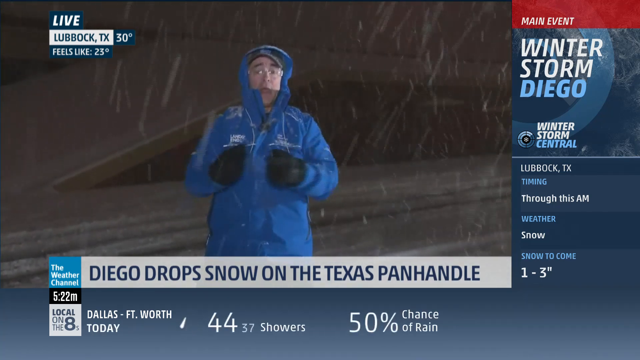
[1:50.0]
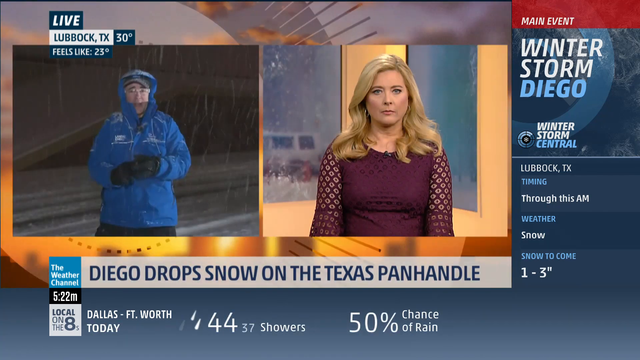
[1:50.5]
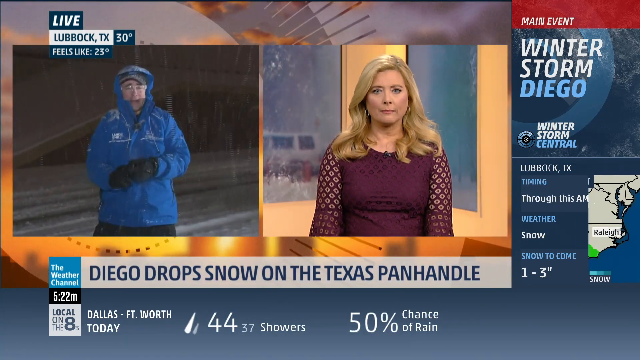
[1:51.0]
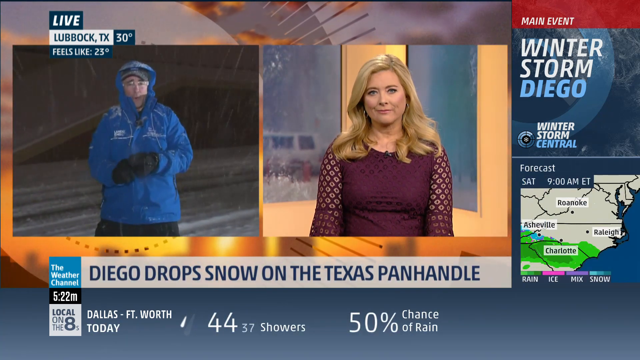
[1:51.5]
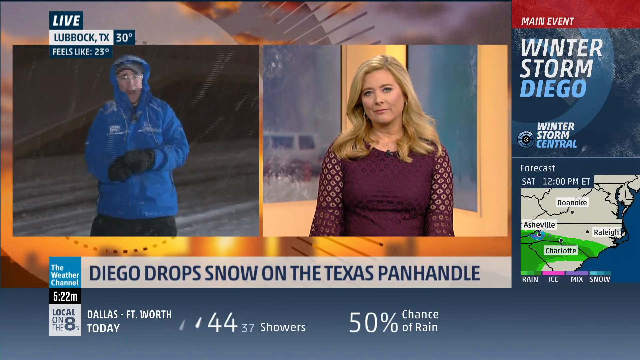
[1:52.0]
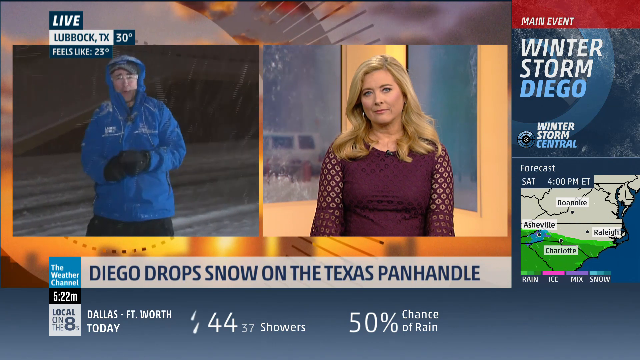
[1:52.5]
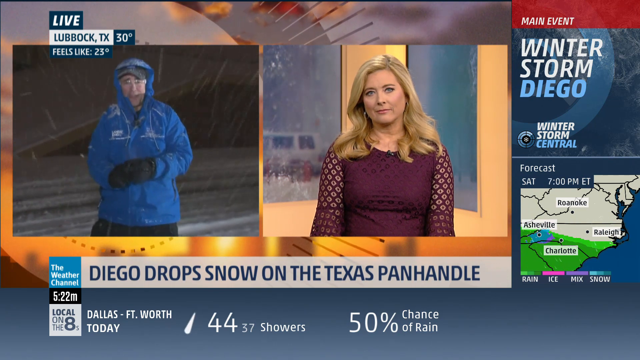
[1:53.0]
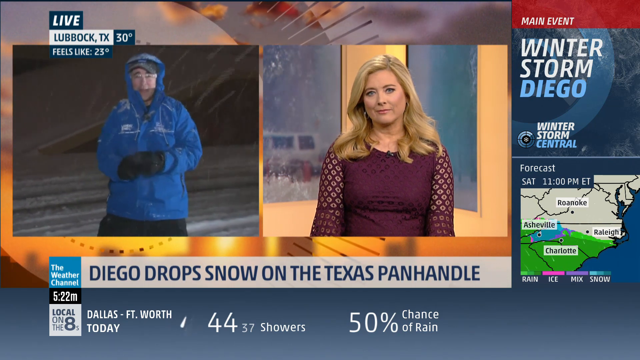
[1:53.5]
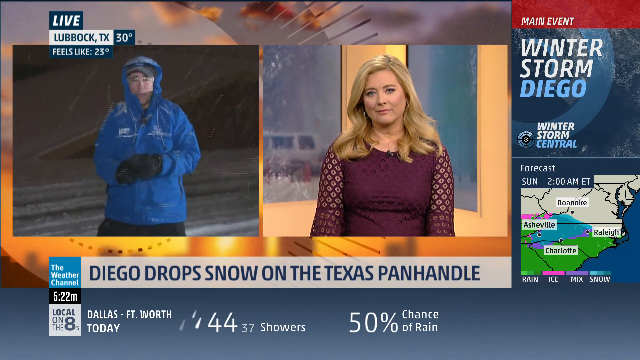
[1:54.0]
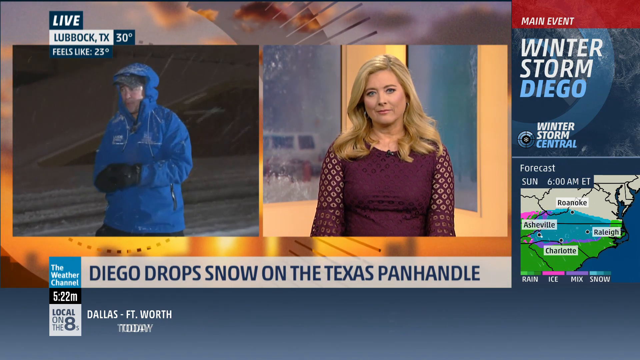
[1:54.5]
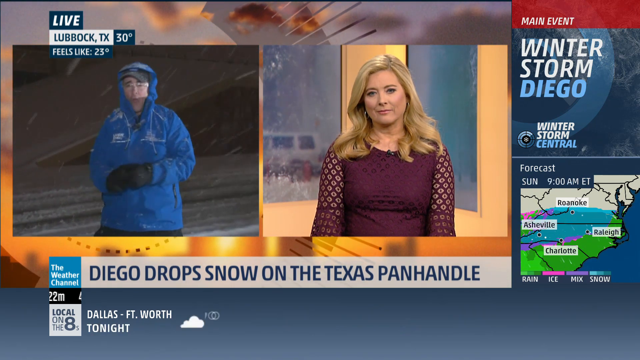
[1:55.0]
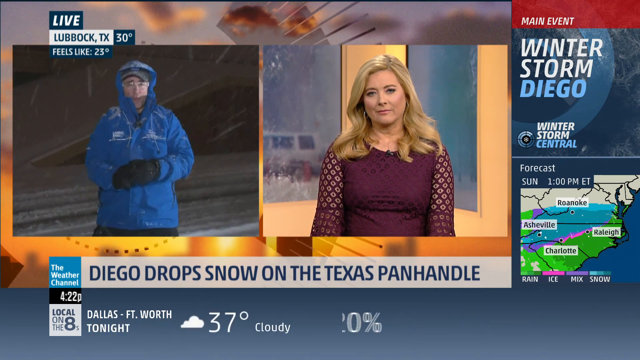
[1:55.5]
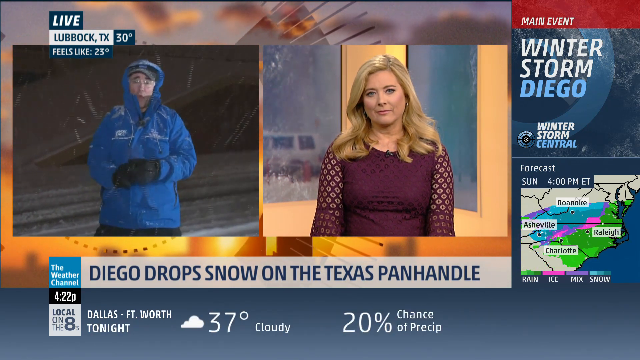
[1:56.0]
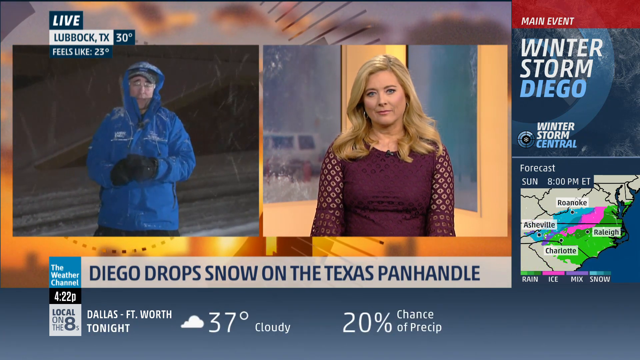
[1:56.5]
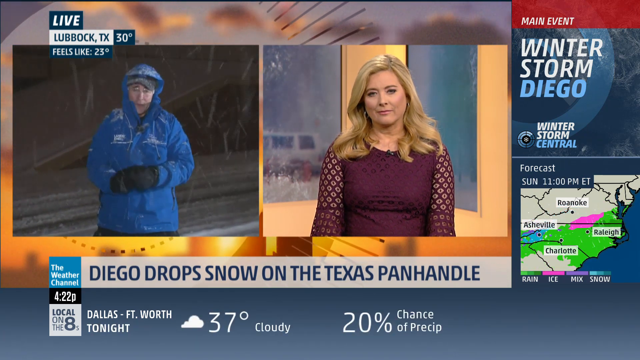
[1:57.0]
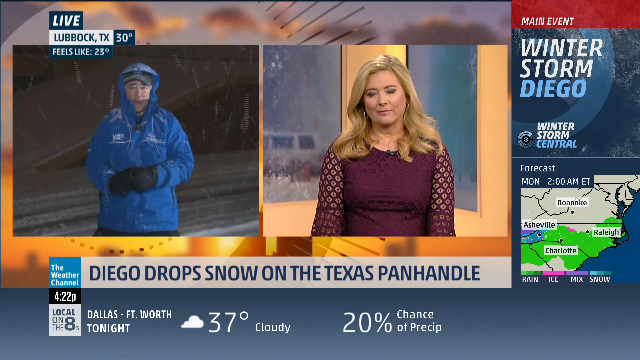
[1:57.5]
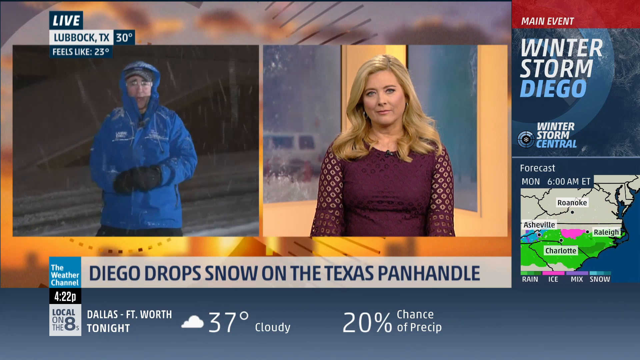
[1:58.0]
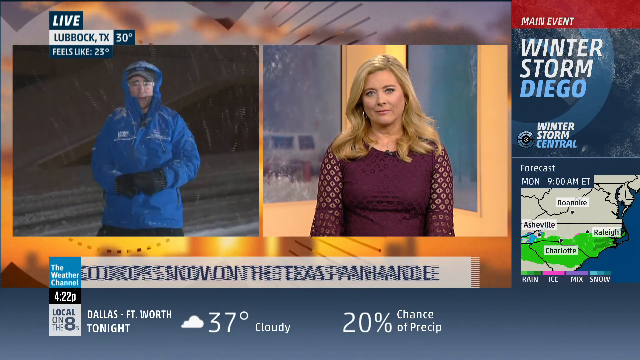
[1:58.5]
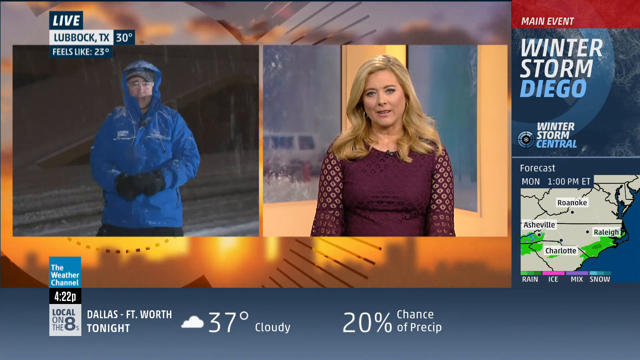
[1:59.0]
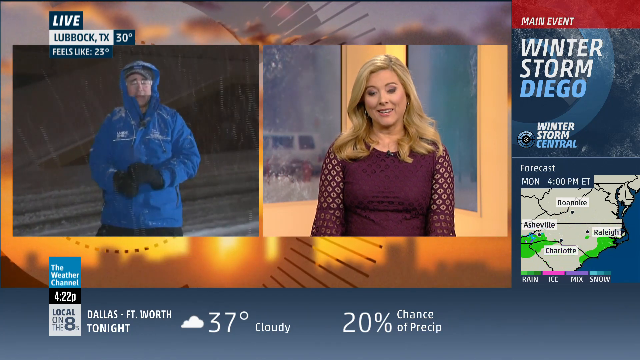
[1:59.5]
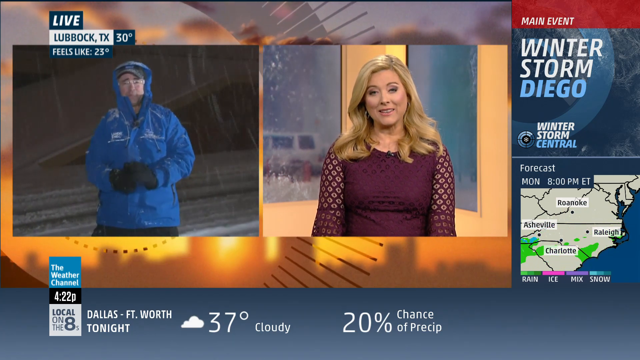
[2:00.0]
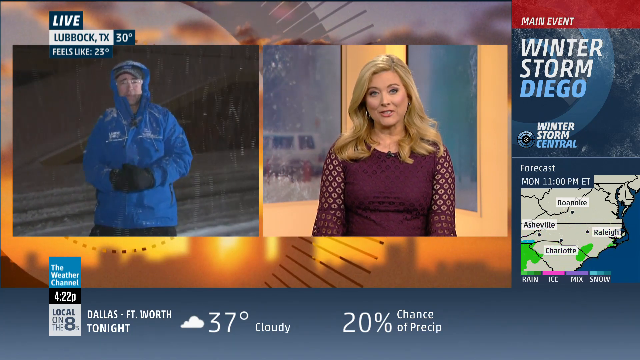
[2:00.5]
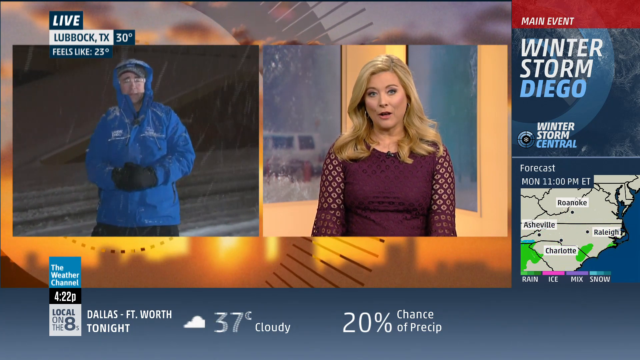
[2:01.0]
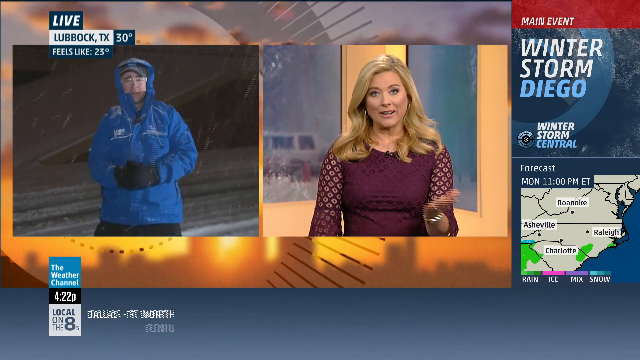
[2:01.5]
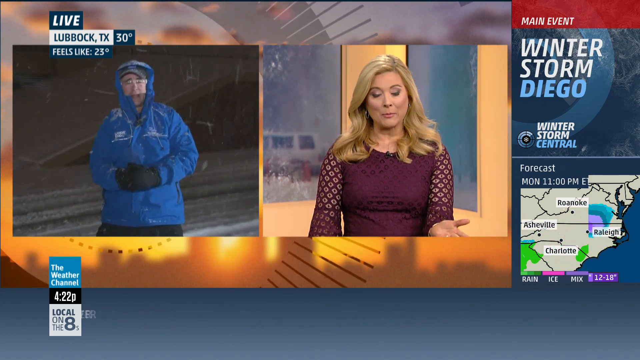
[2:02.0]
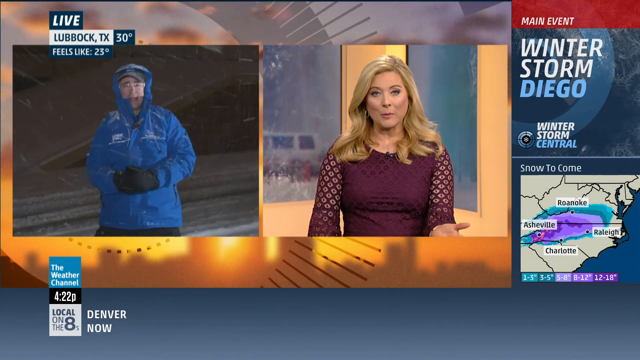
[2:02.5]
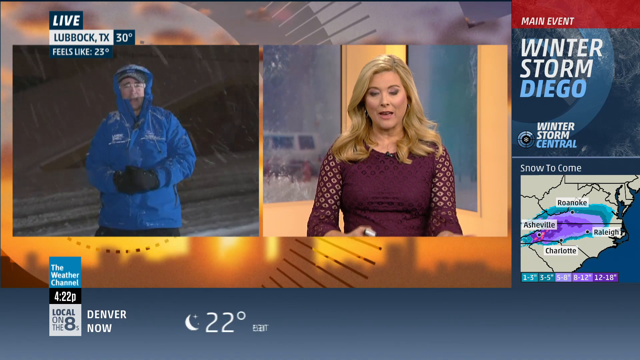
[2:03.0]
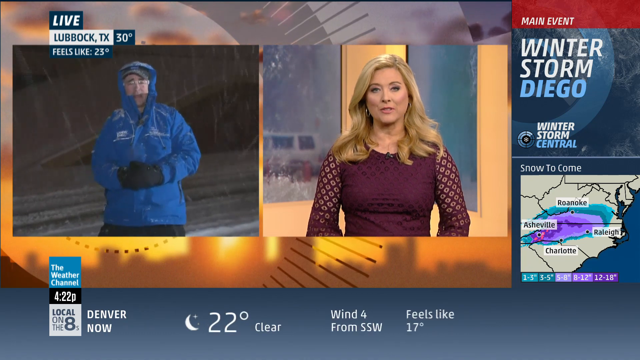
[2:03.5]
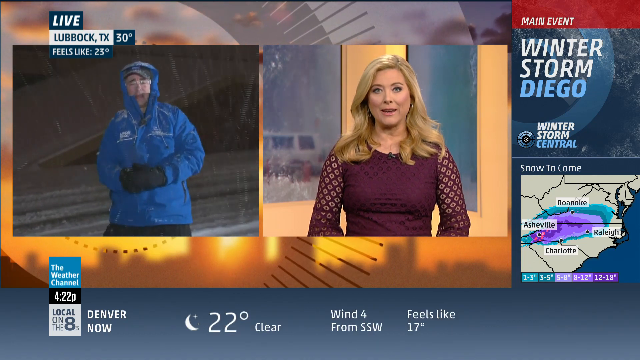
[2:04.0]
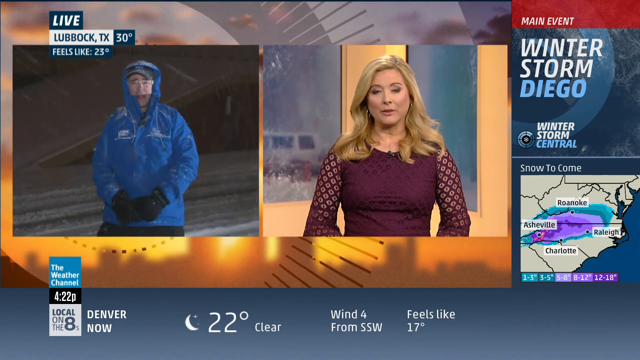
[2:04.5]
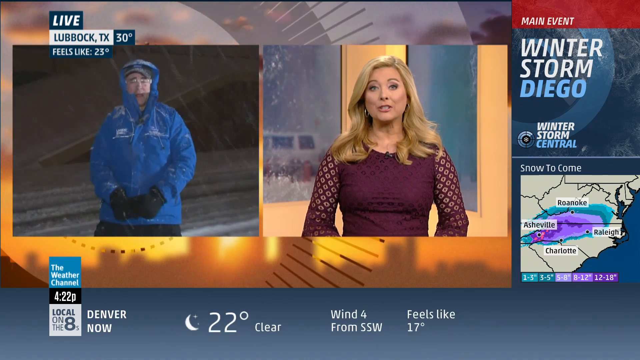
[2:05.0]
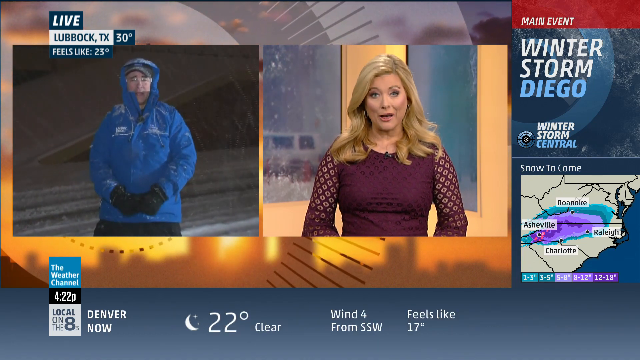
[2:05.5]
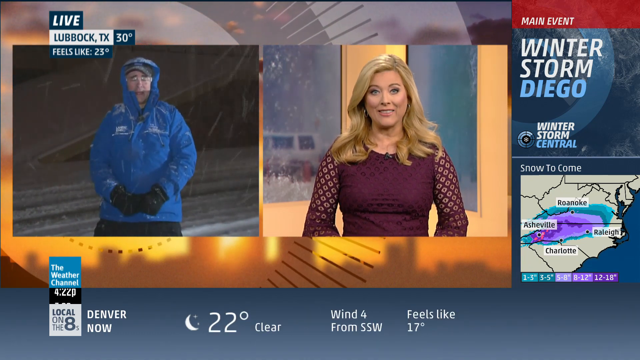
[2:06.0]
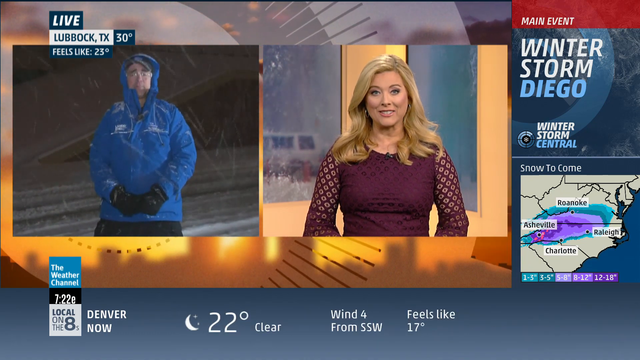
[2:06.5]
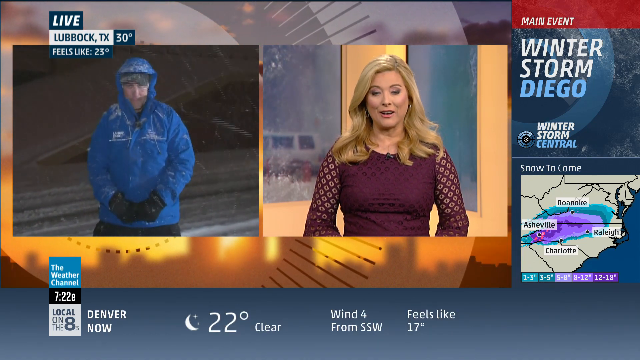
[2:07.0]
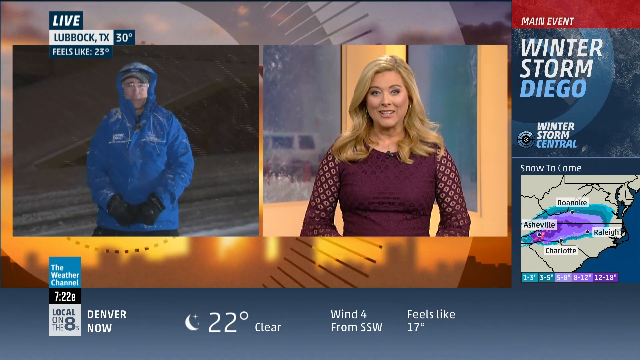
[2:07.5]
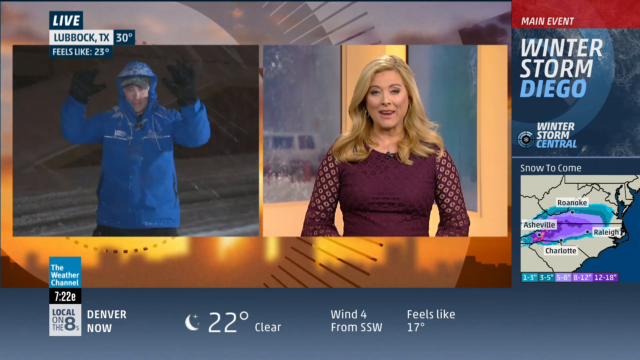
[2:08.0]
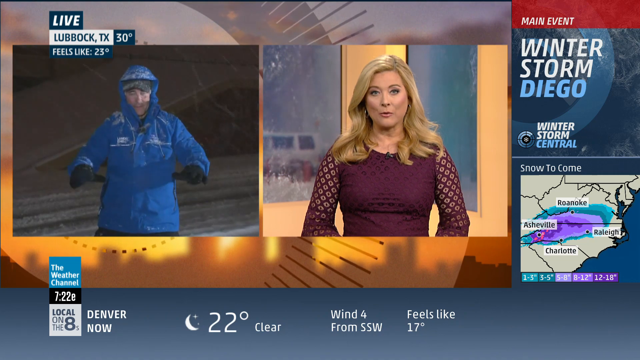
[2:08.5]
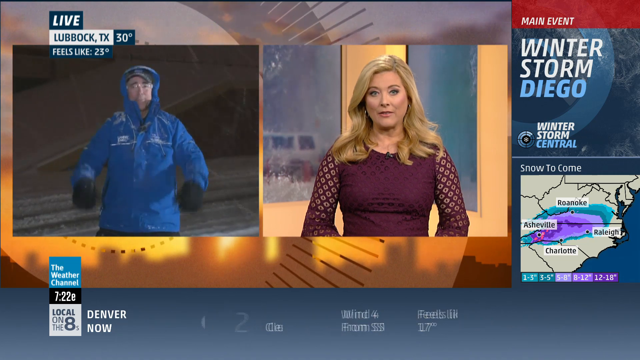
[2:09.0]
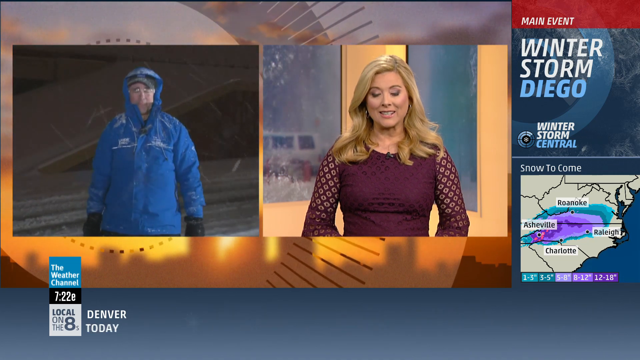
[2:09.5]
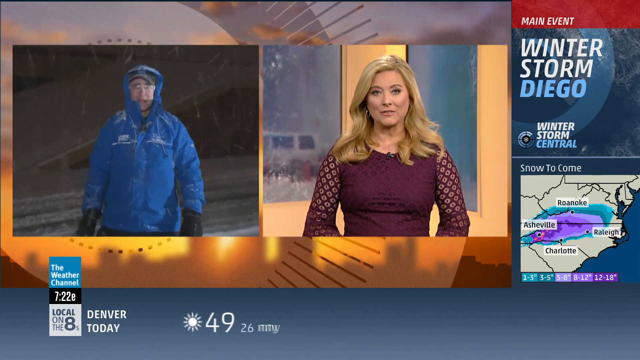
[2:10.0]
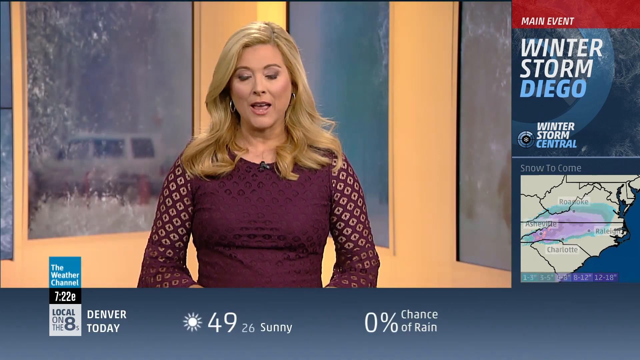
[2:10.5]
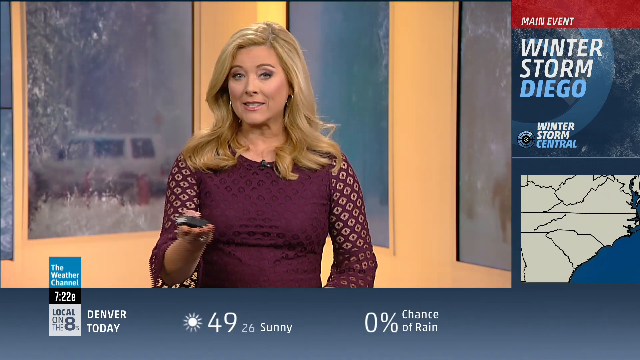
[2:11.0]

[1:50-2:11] The broadcast from Lubbock, TX still shows 30 degrees, feeling like 23 degrees, on the Weather Channel, America's number one weather network, trusted, reliable and accurate, with the story of Diego dropping snow on the Texas Panhandle. The field presenter talks with another news presenter, a white woman with blonde hair wearing a maroon dress, who holds a remote in her hands and has a microphone on her dress. She is inside a news studio with bright lights, where the footage of snow all over the place was shown. The time reads 7:22, and the main event is Winter storm Diego.